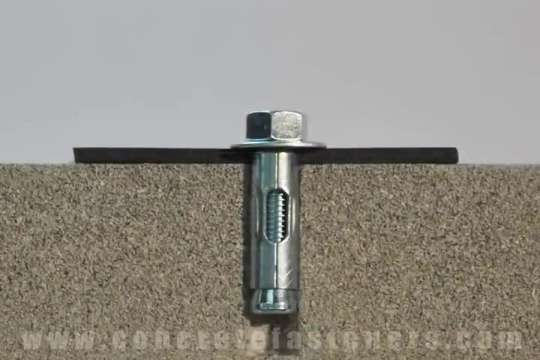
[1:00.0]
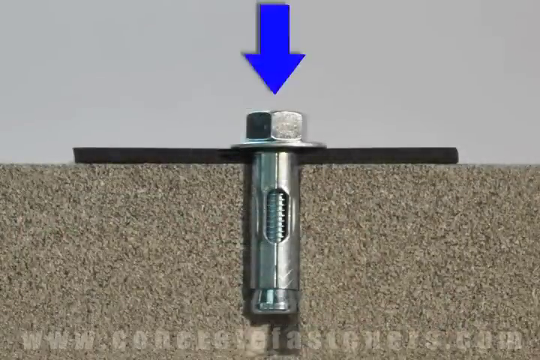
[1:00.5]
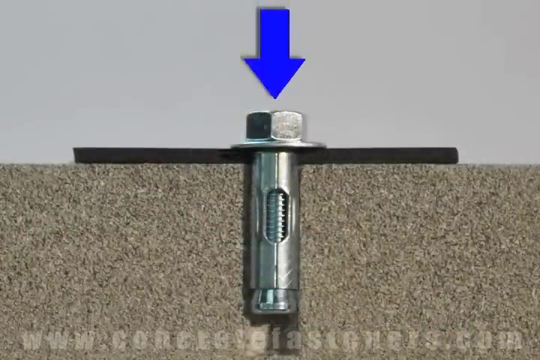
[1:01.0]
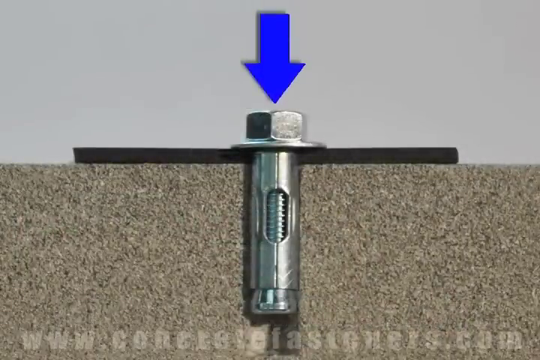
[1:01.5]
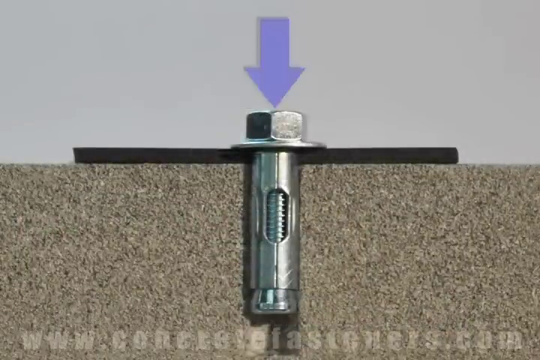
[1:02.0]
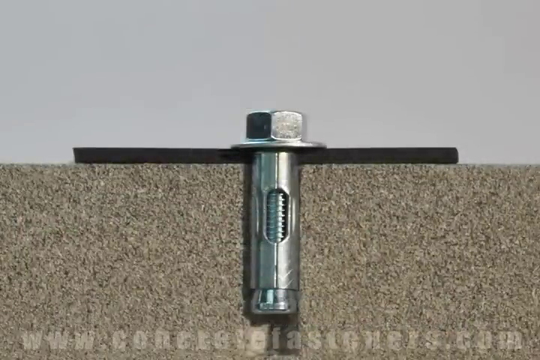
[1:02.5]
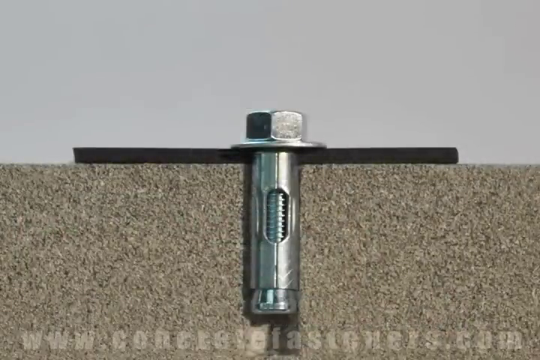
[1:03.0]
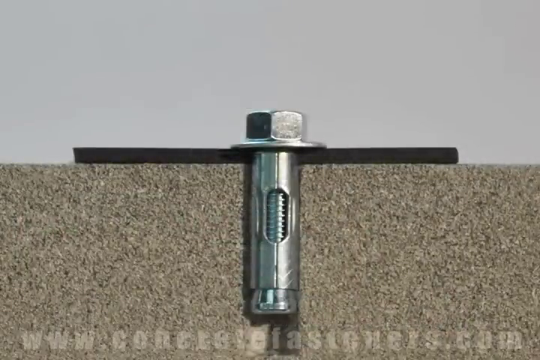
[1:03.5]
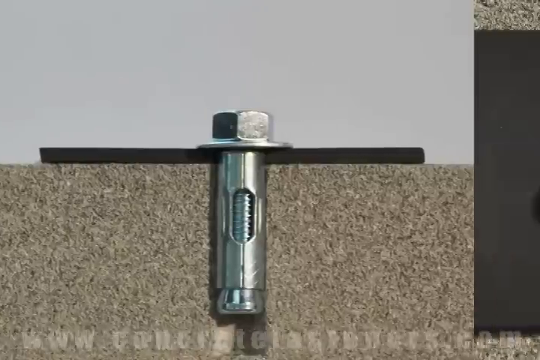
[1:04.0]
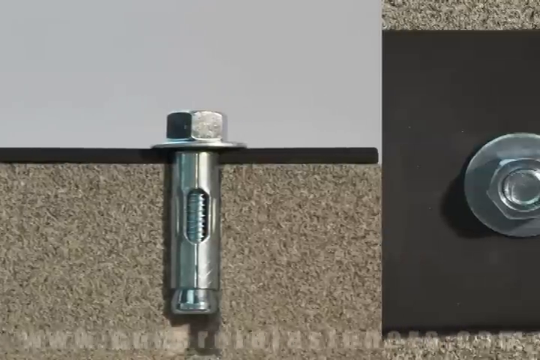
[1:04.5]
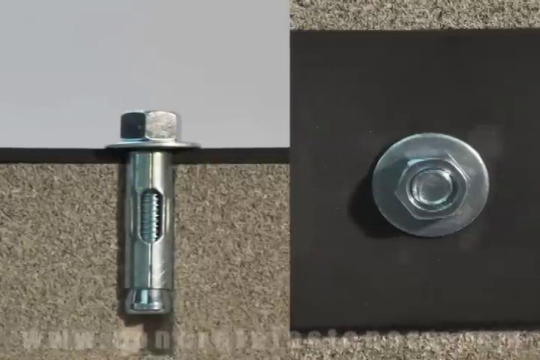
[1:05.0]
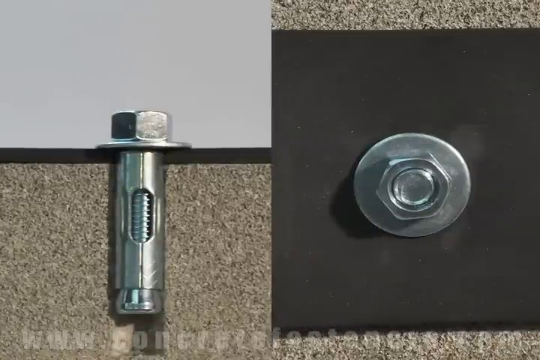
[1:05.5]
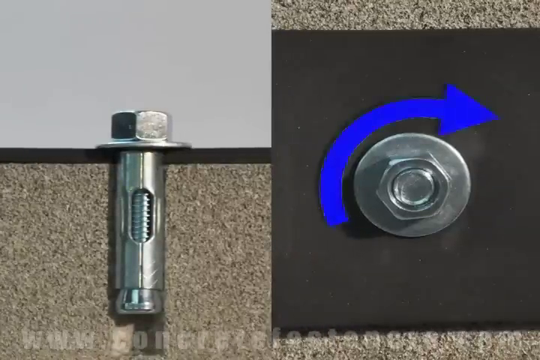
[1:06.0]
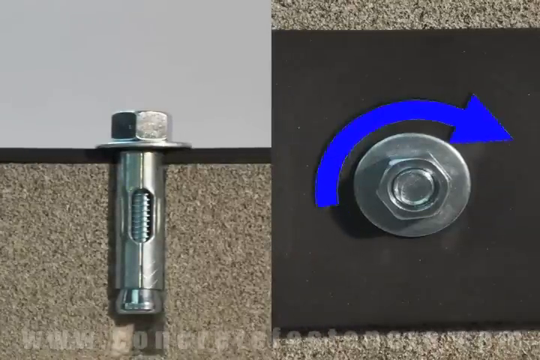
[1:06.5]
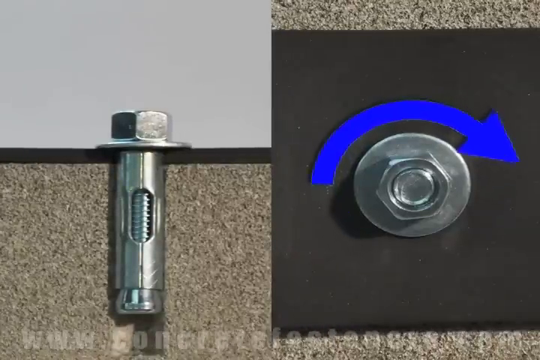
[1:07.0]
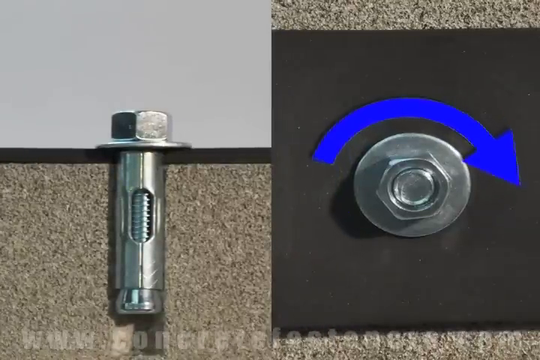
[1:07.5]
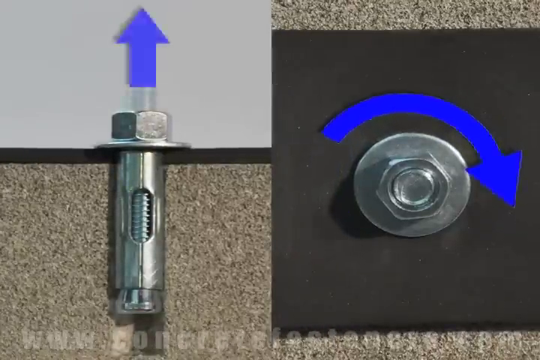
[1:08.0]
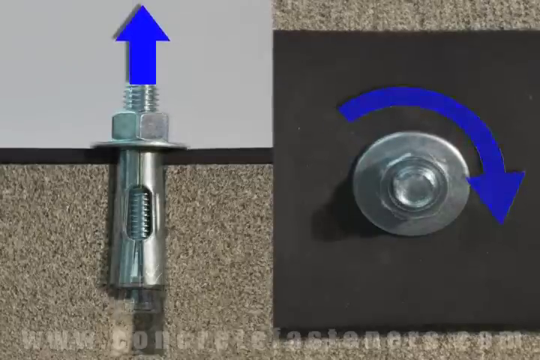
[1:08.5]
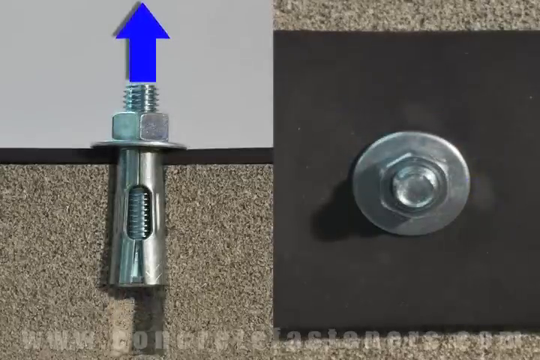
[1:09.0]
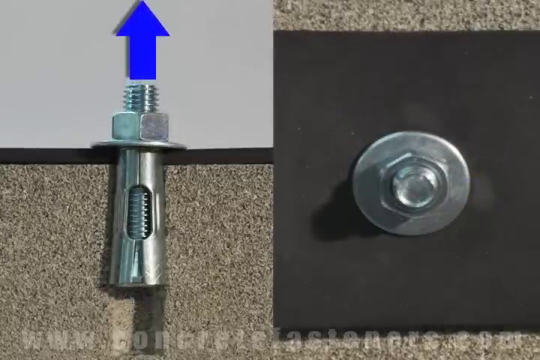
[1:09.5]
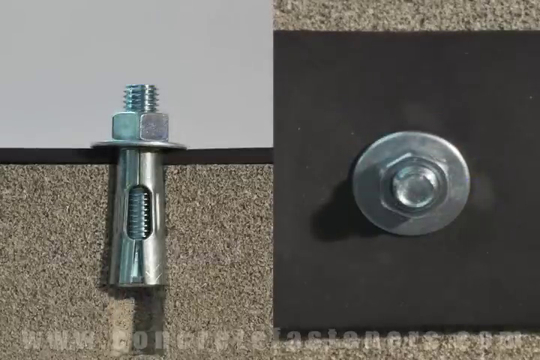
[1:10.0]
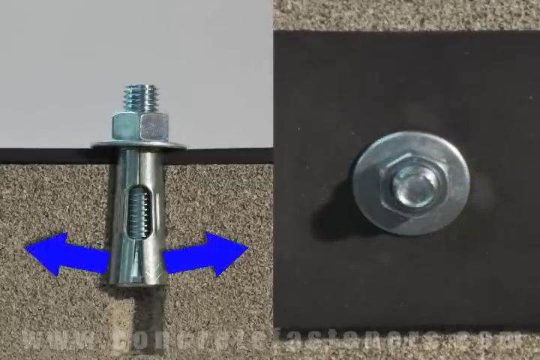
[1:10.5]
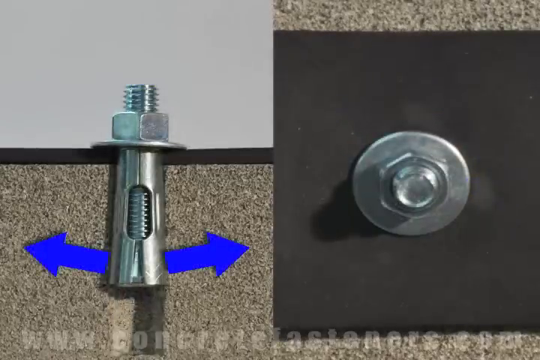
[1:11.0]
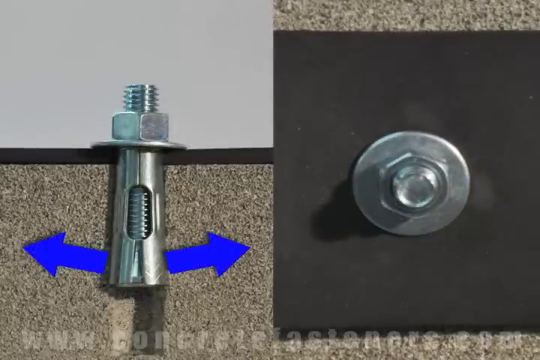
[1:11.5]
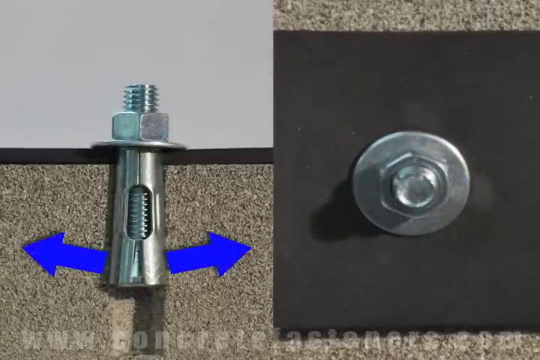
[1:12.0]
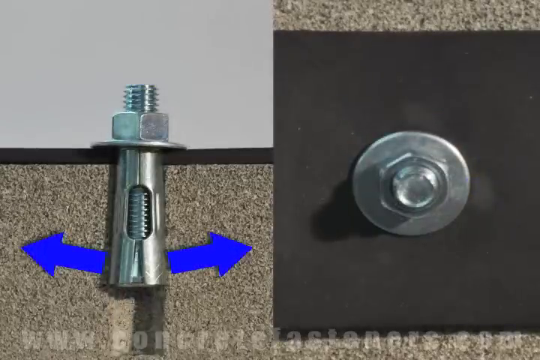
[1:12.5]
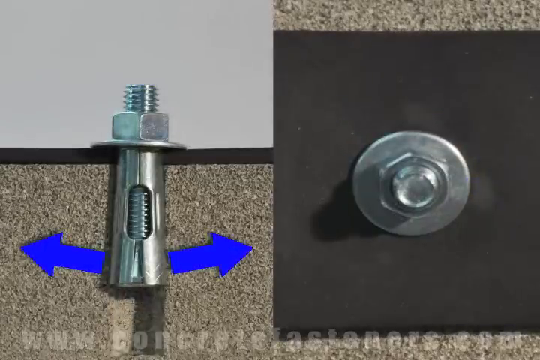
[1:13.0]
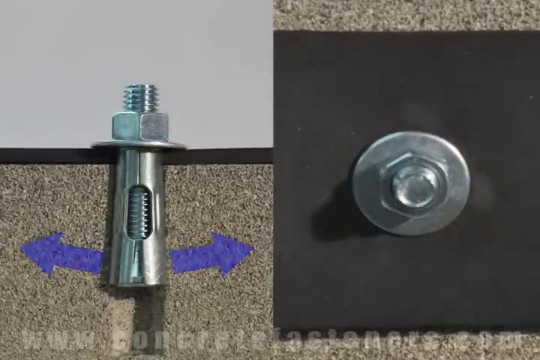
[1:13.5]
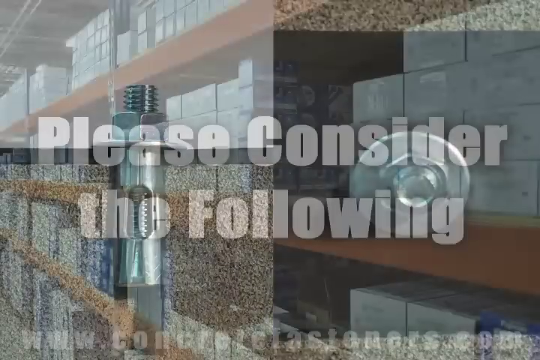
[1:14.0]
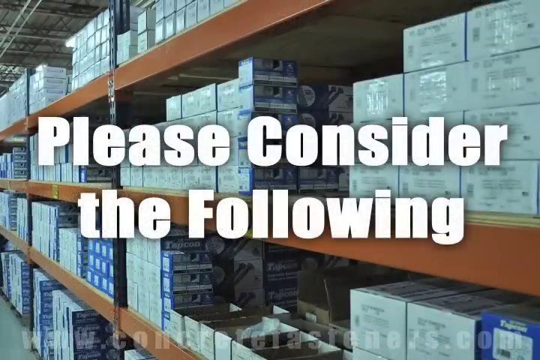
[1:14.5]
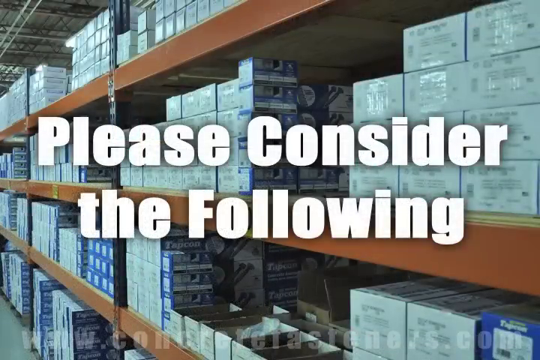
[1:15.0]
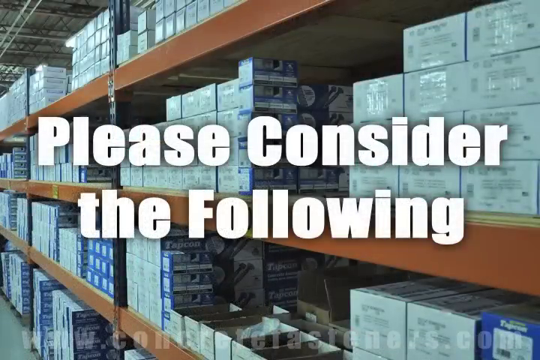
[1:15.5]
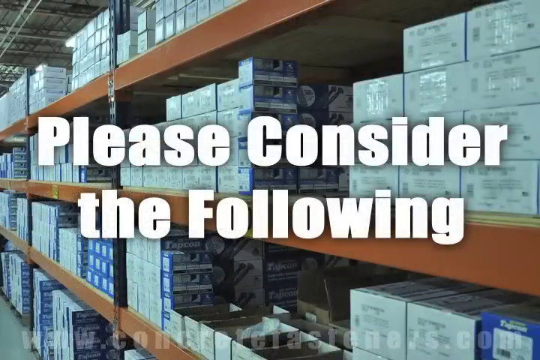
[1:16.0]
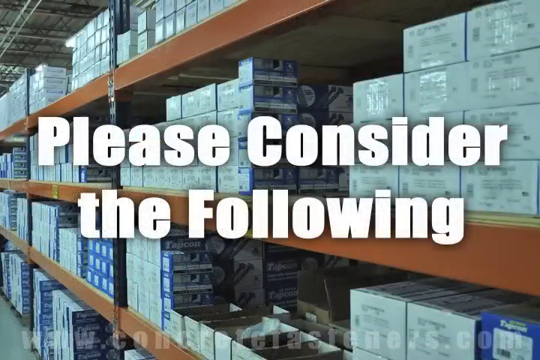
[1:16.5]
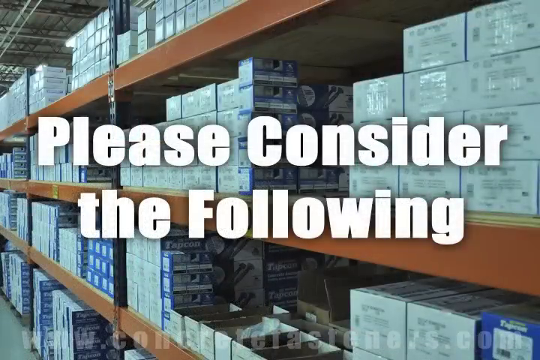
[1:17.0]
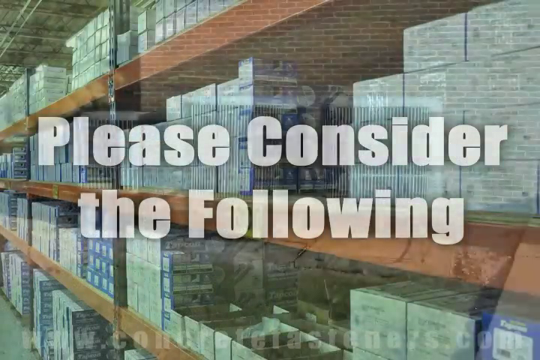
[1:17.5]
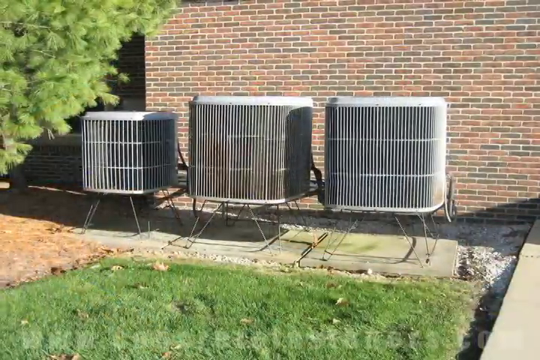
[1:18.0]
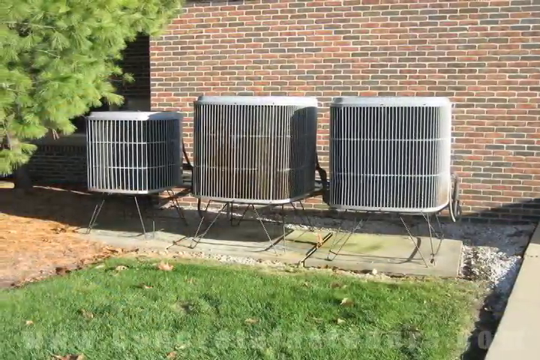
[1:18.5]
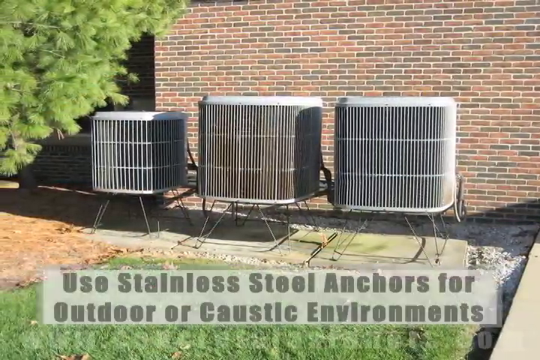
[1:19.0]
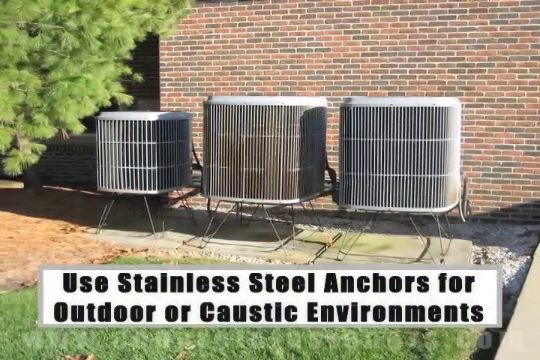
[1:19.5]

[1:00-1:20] The same picture of the sleeved anchor in the concrete is shown, with an arrow pointing at the top of the anchor. On the right-hand side of the video, the top of the anchor is turned clockwise; as it turns, the top part of the anchor comes up and the bottom sleeved part expands into the concrete. A brief screen then says "please consider the following." Next, about three AC units are shown, all outside and all different sizes: apparently a smallest one, a medium-sized one, and a very large one.